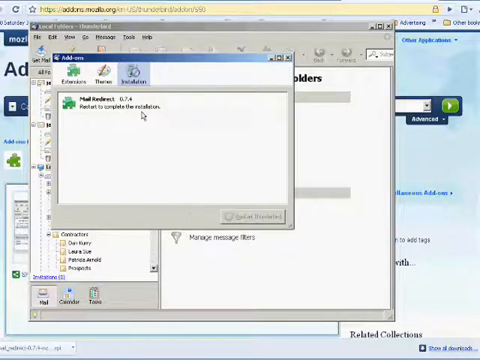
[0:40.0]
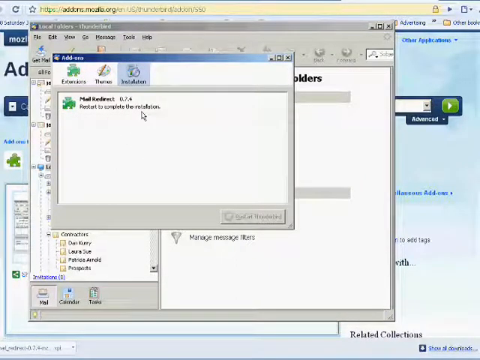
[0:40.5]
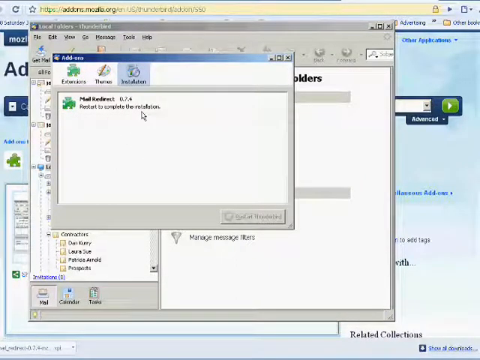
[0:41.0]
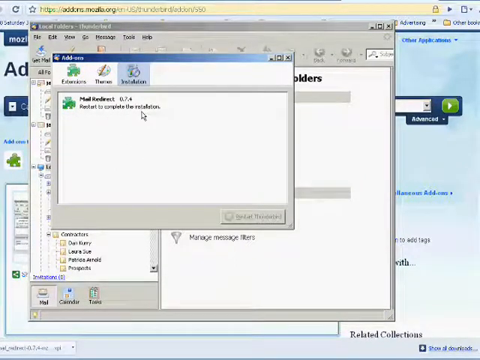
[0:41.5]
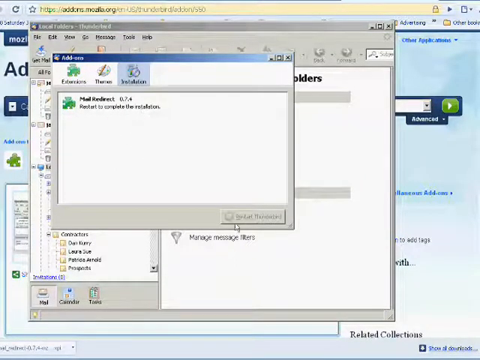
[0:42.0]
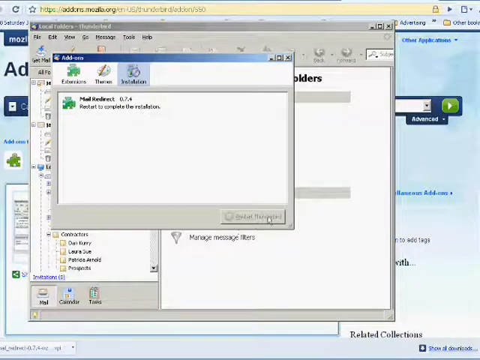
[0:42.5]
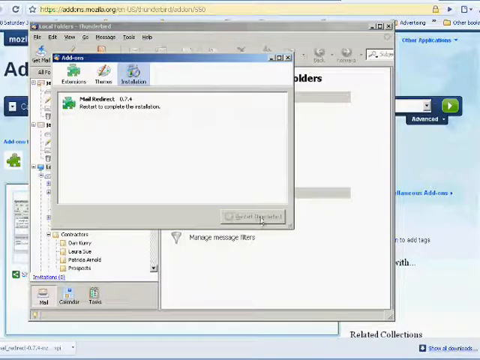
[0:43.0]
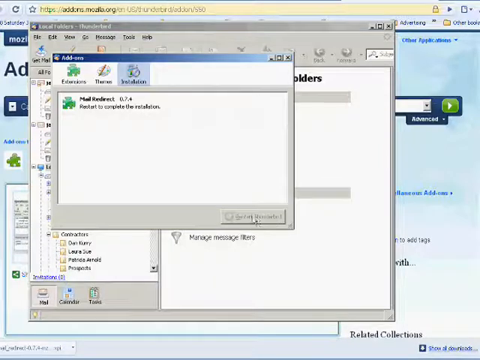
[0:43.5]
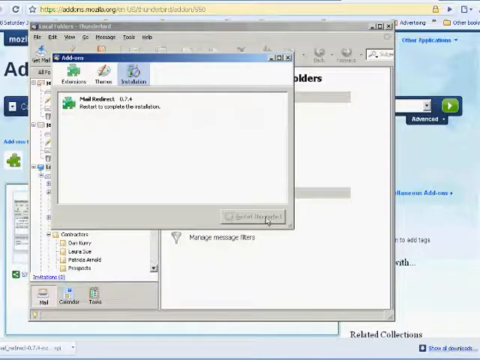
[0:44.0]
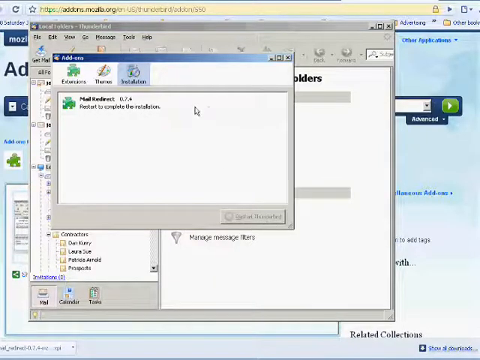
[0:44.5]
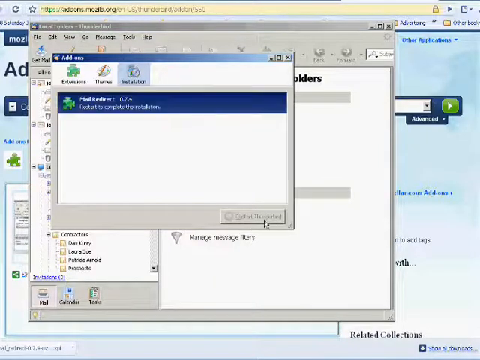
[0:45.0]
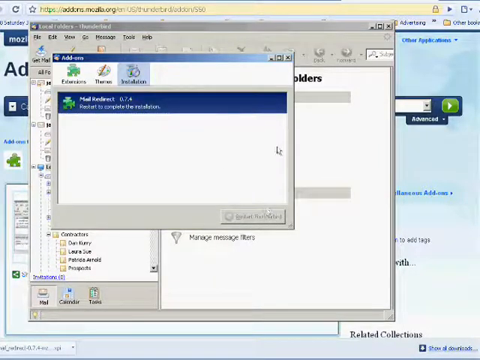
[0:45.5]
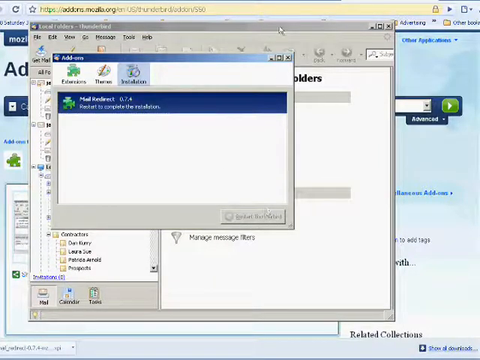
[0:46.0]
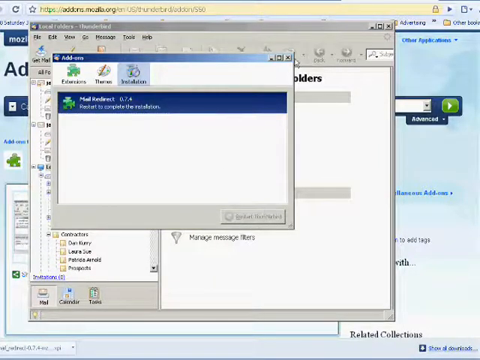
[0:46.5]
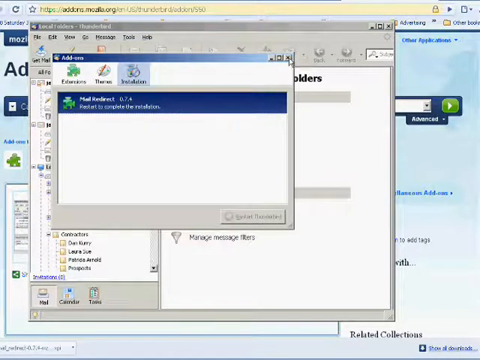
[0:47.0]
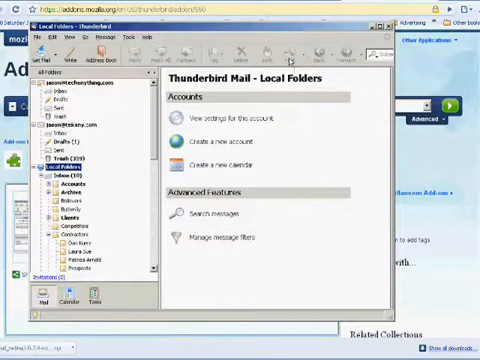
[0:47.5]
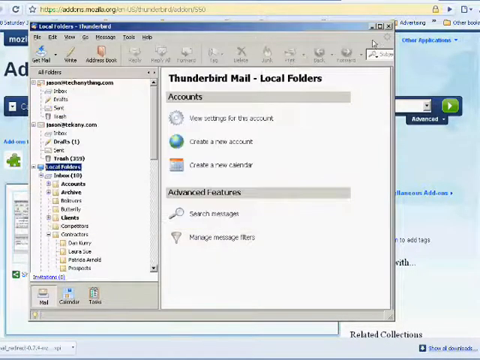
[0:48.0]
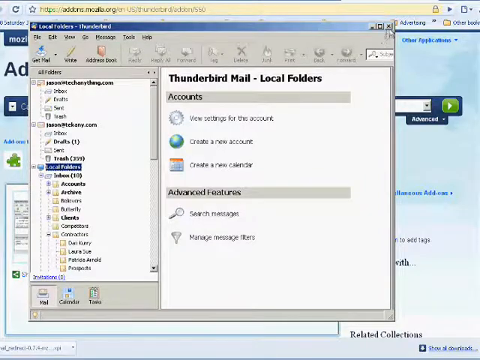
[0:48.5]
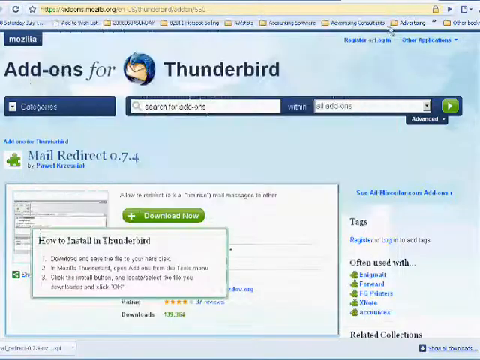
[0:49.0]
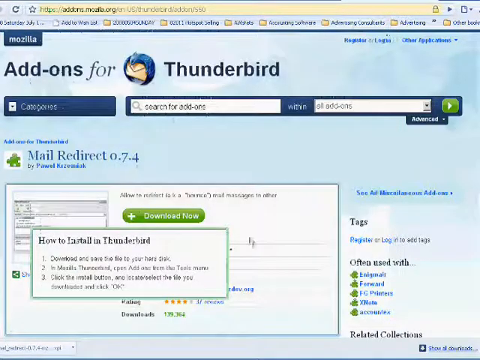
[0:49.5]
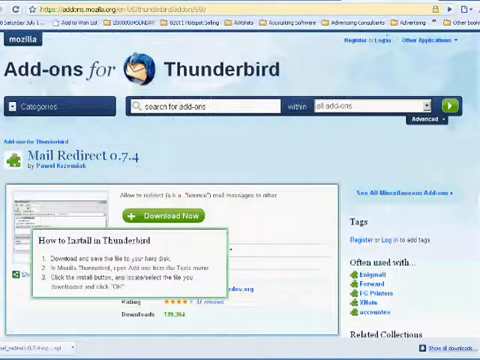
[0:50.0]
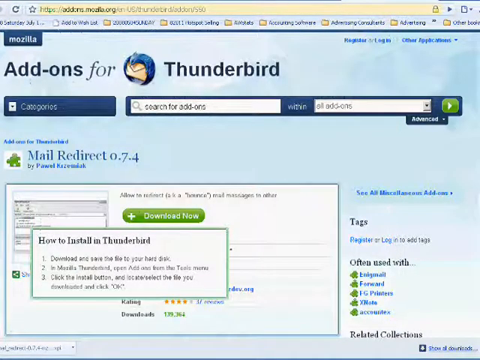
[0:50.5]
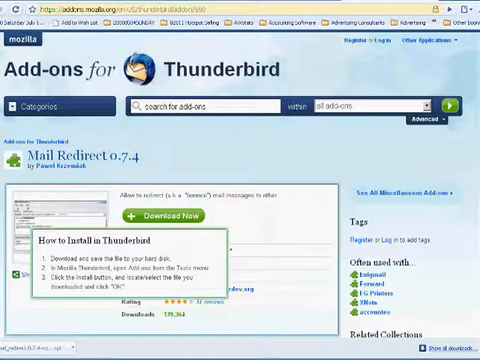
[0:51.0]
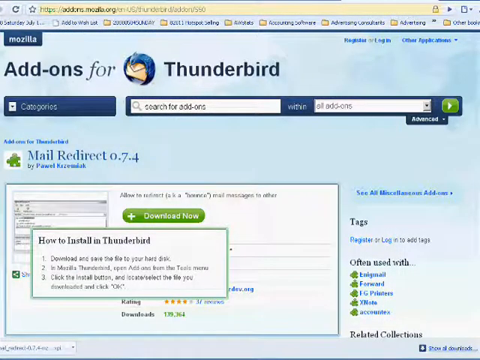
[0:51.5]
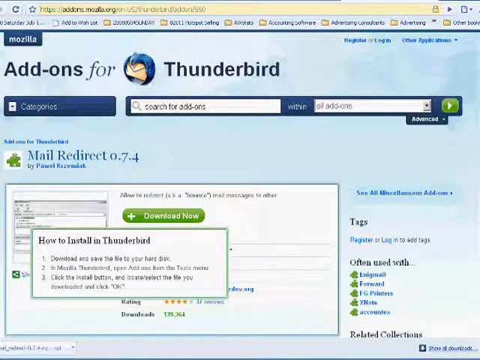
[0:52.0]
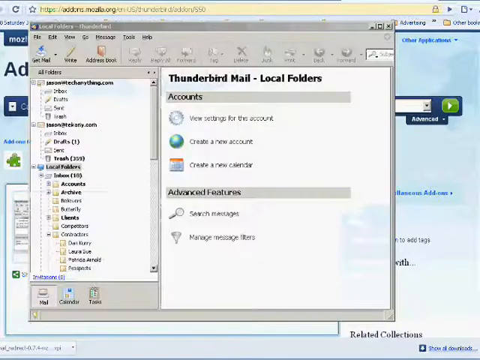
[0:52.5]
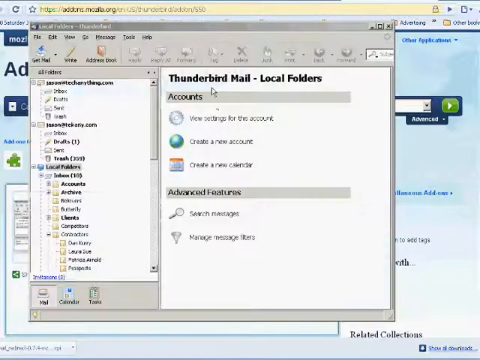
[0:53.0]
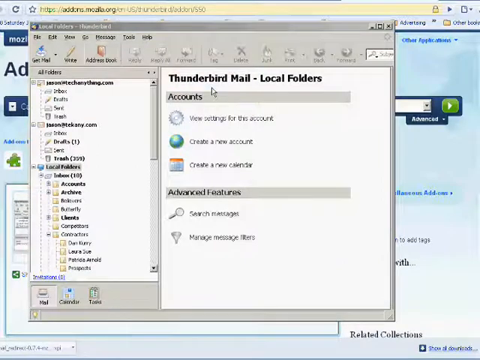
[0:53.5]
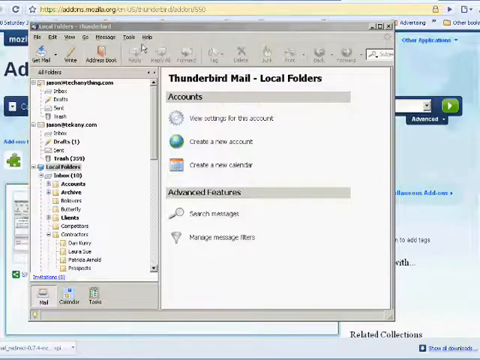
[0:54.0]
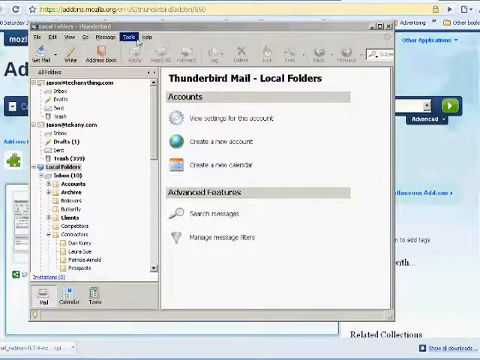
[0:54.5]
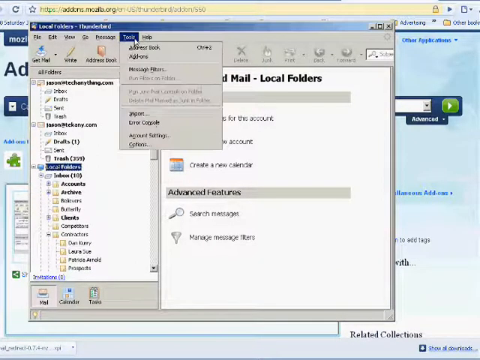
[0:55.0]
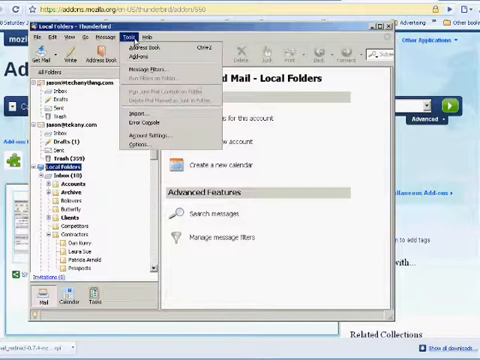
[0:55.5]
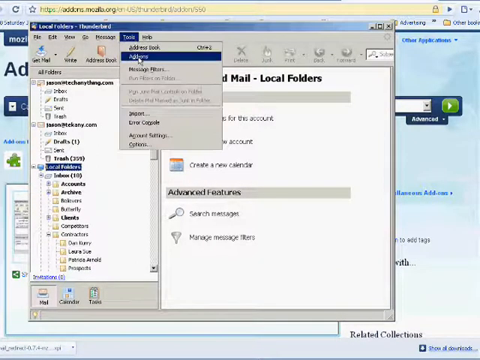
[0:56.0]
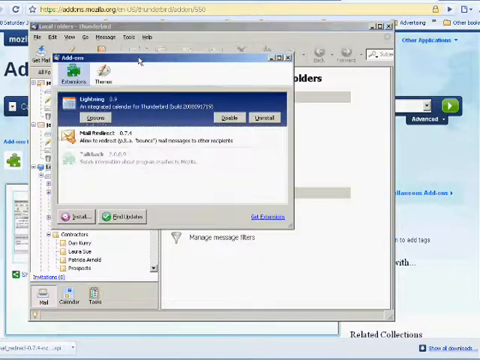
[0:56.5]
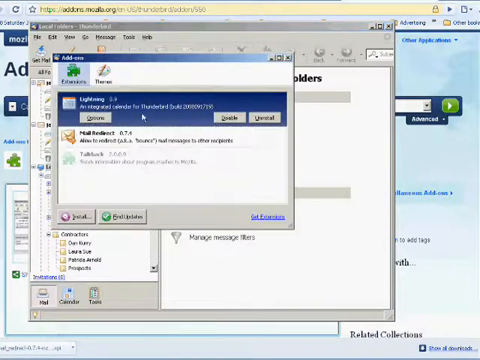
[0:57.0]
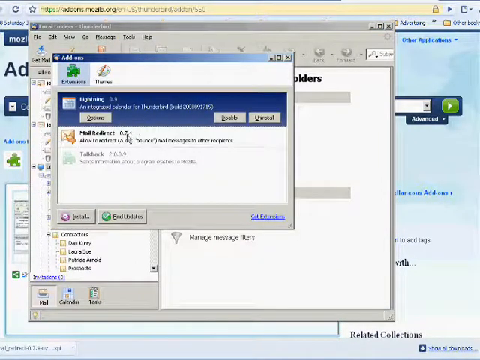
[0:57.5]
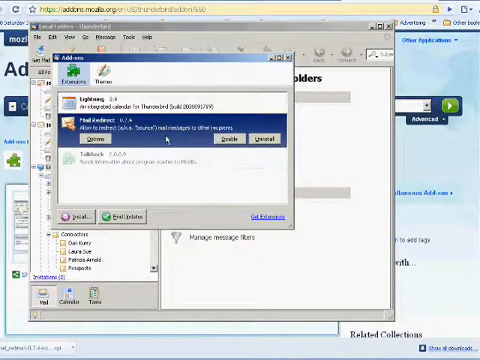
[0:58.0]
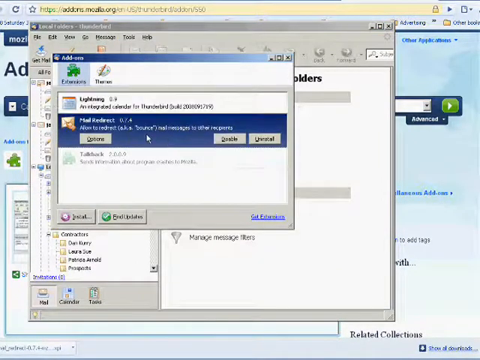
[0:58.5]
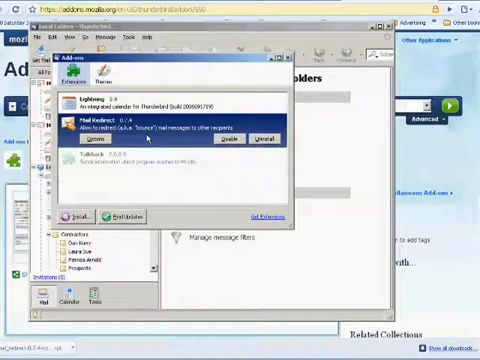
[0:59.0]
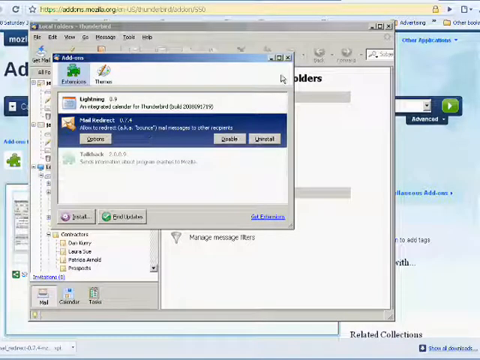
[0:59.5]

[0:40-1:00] The Mail Redirect add-on has been selected, and a pop-up window offers the choices extensions, themes, or installation. The user closes the pop-up and returns to the local folders in Thunderbird, clicking the tools menu and then add-ons. Under extensions is a list of extensions: the first looks like it says "Lightning," the second says "Mail Redirect," and the third appears to say "TalkBack." The user selects the second one, Mail Redirect, which highlights in blue, and options appear to either uninstall it or look for updates for this extension.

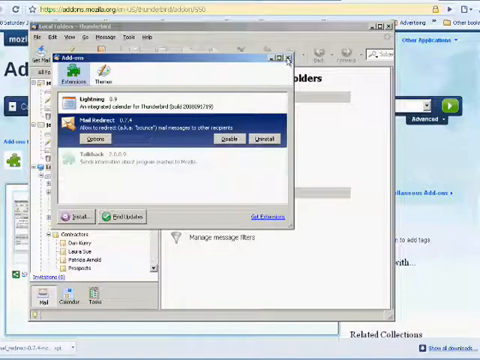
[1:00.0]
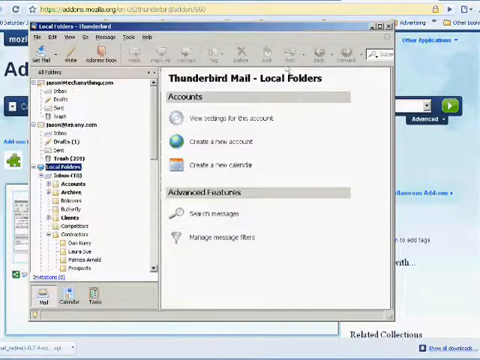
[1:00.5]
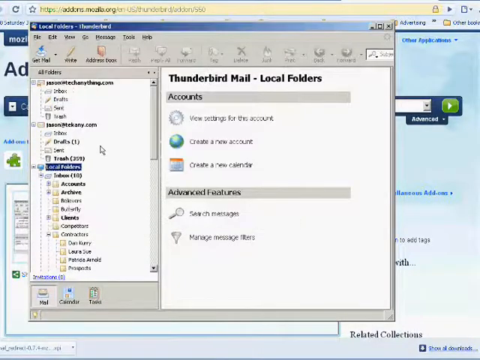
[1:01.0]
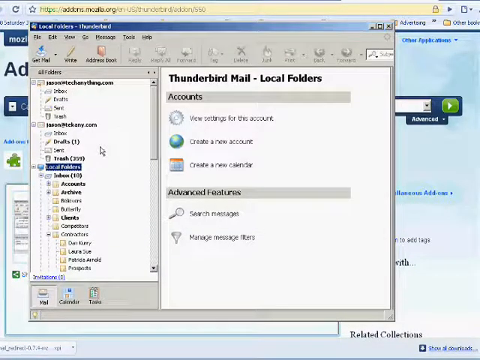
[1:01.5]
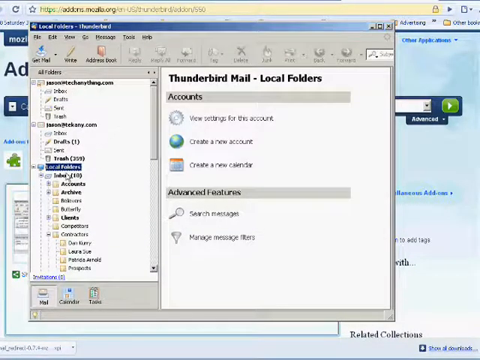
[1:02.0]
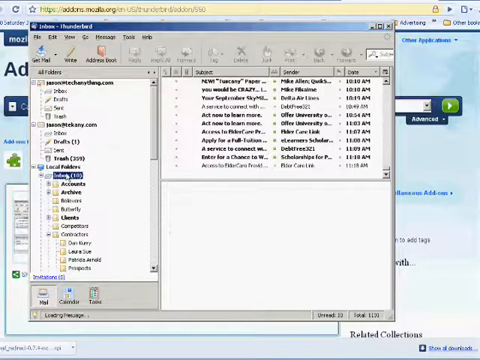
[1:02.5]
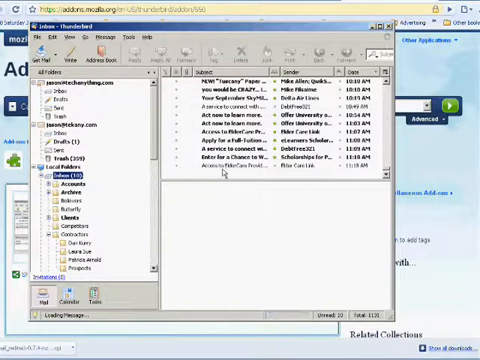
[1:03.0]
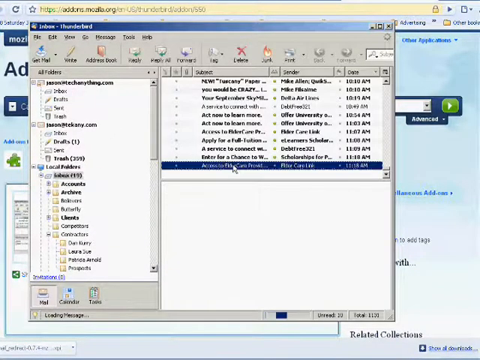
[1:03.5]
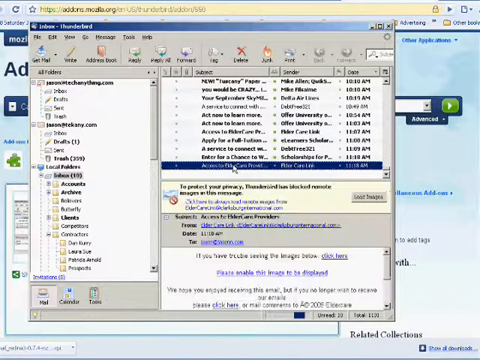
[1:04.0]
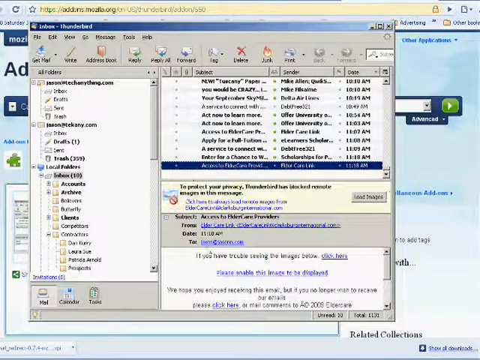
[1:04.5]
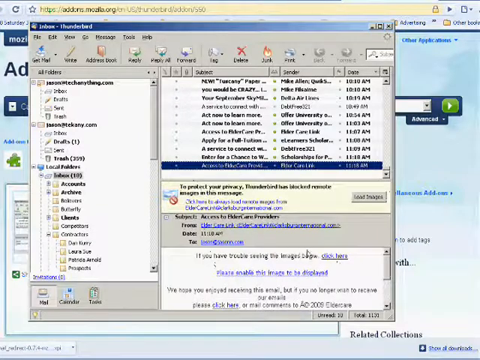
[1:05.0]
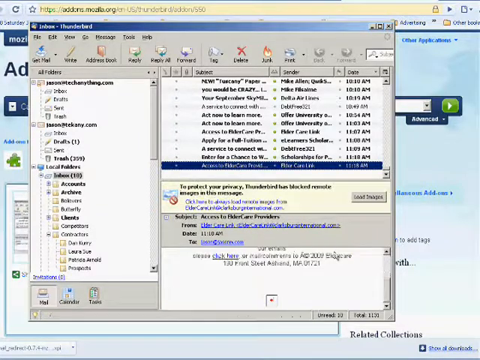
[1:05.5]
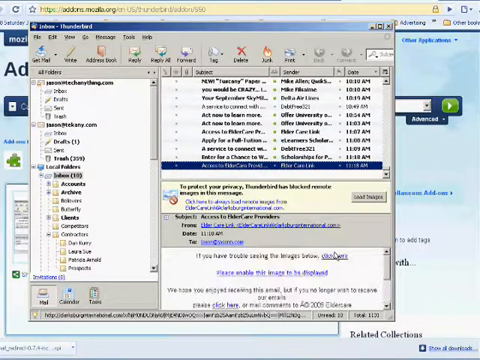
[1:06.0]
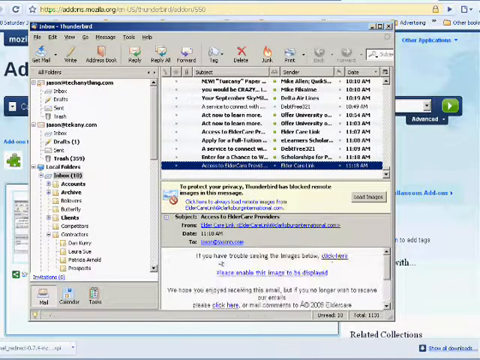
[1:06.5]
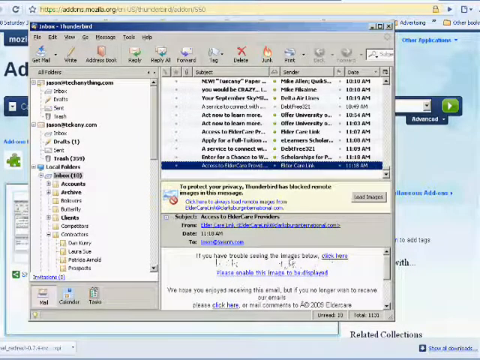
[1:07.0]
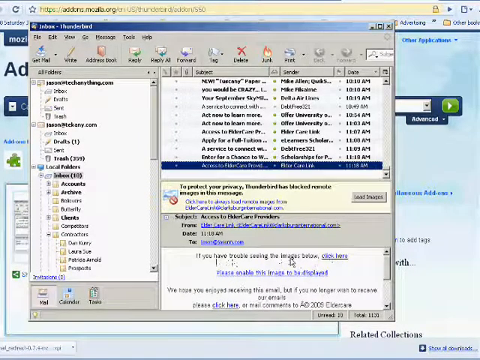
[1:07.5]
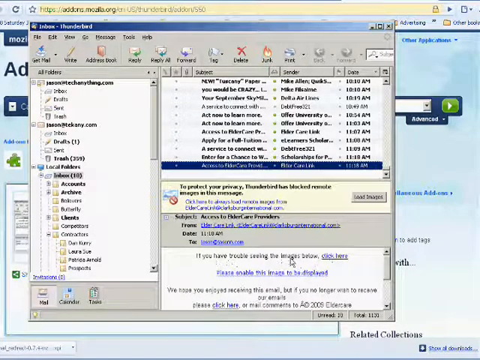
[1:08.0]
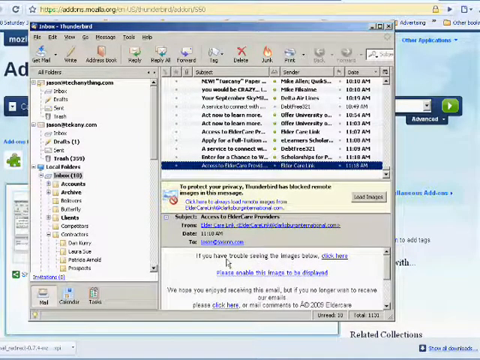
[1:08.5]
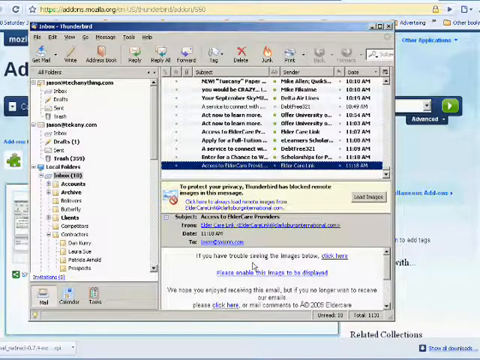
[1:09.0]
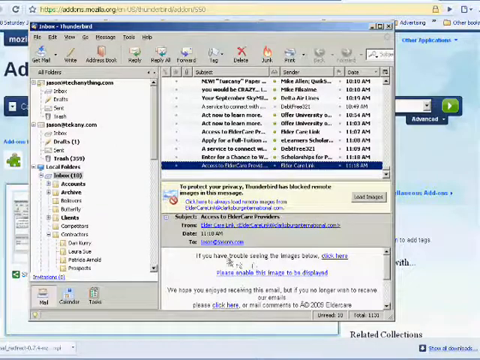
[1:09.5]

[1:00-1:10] The Thunderbird mail local folders are shown in a window, with a list of all the folders on the left-hand side. Another window just to the right says "Thunderbird mail local folders" and offers options under accounts to view settings for the account, create a new account, or create a new calendar, as well as advanced features to search messages or manage message filters. The user selects the toolbox right underneath the local folders, which opens, and the window on the right shows what looks like a list of emails, apparently the Thunderbird inbox. A toolbar underneath lists get mail, write, address book, reply, reply all, forward, tag, delete, junk, and print. The mail is listed by subject, with whether each has been opened, the sender's name, and the date. The user selects the last email in the list. A message underneath says "to protect your privacy, Thunderbird has blocked" followed by a hard-to-read word and "images in this message," with some detail on why content from this sender was blocked. Another message says "if you have trouble seeing this image below, click here," and there is an option to enable or disable that filtering of the image.